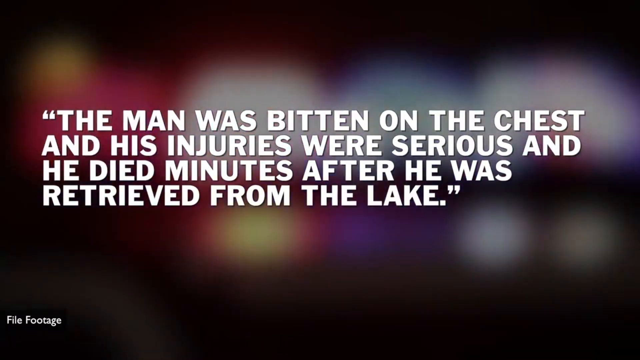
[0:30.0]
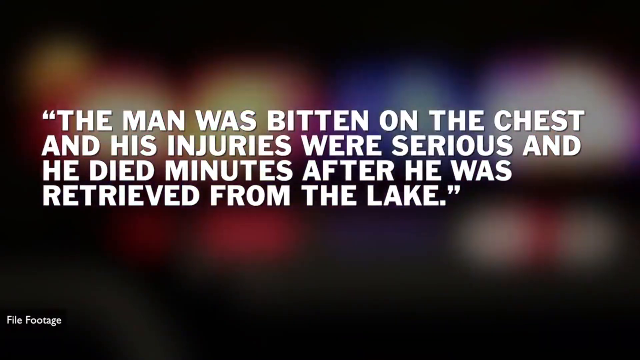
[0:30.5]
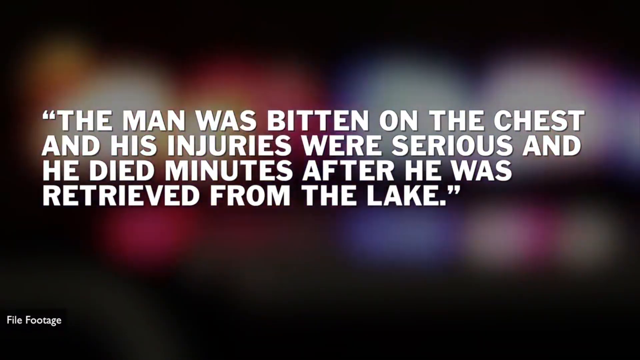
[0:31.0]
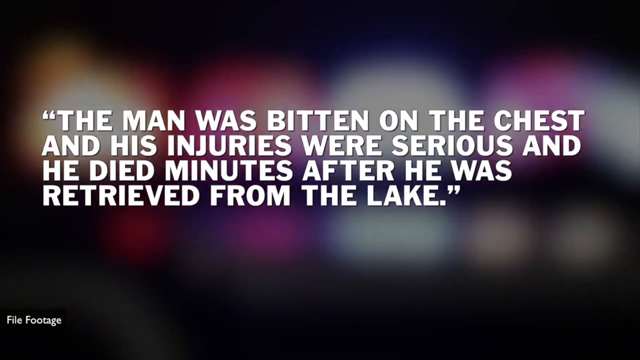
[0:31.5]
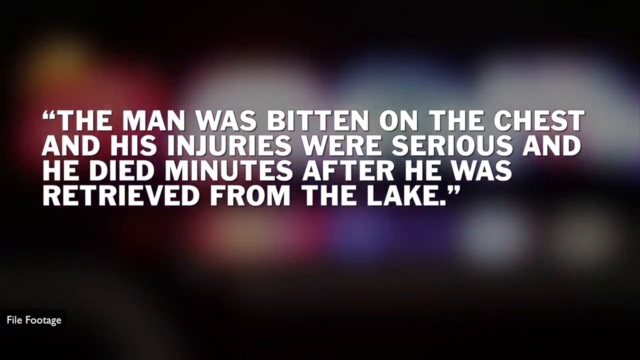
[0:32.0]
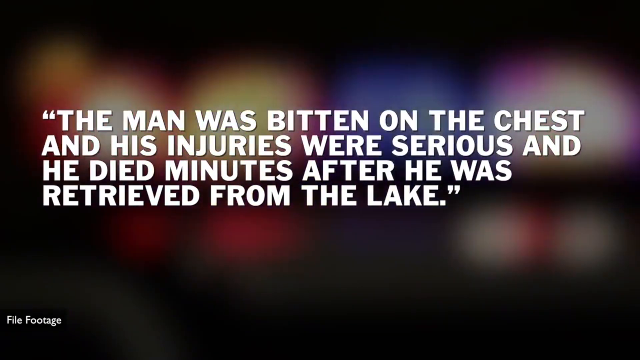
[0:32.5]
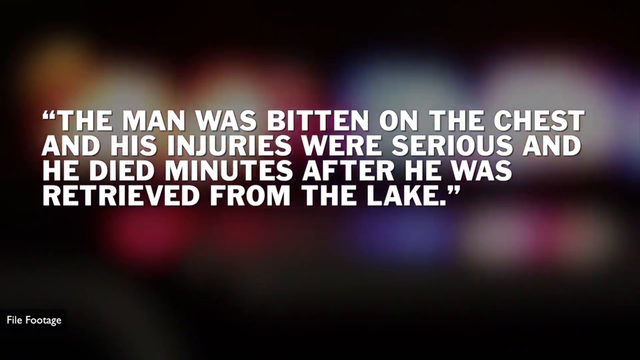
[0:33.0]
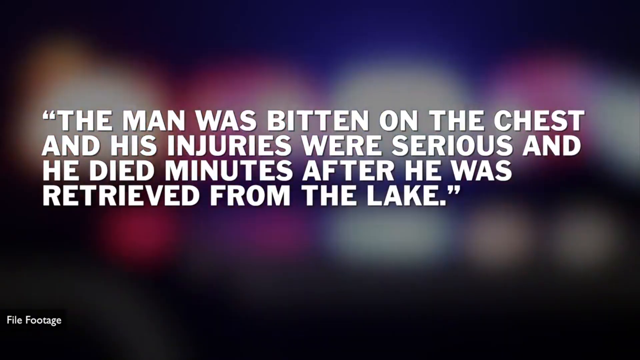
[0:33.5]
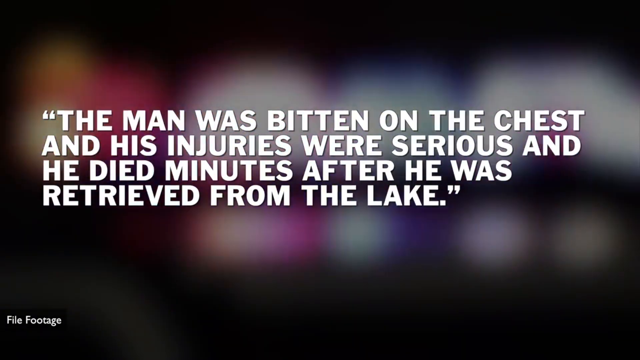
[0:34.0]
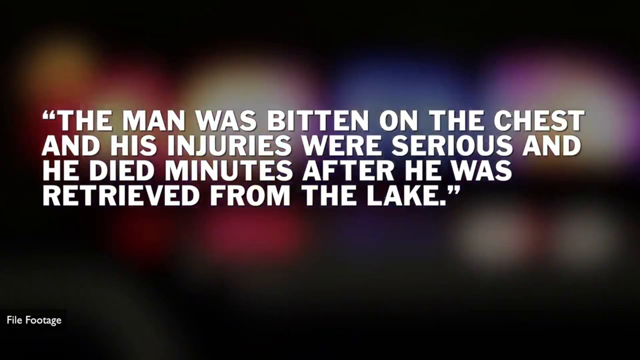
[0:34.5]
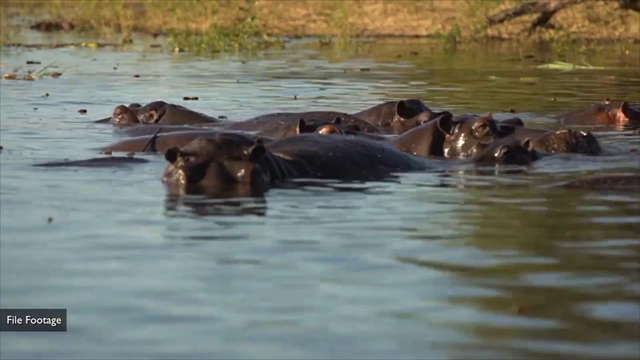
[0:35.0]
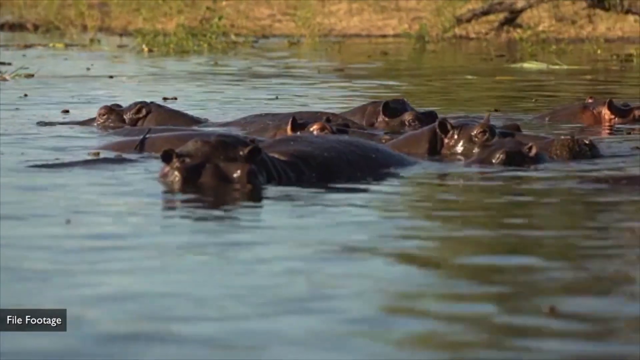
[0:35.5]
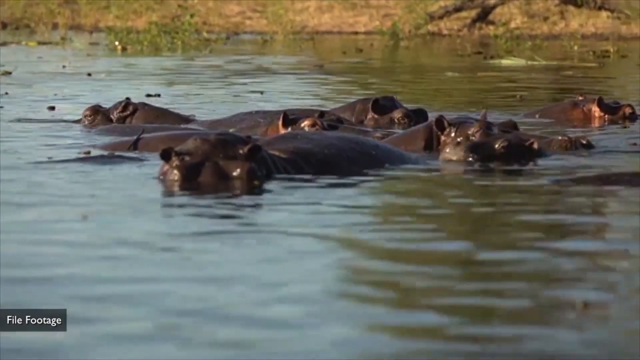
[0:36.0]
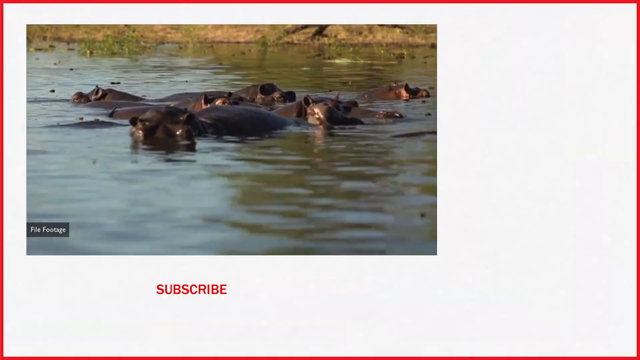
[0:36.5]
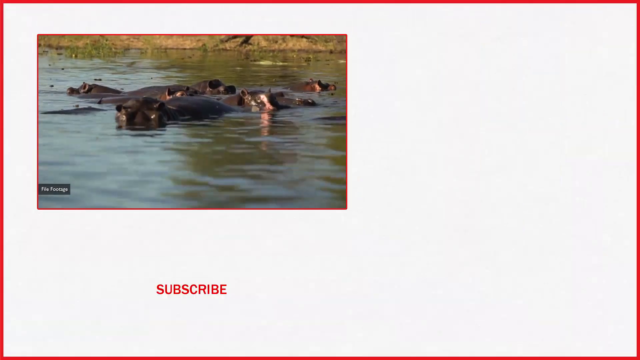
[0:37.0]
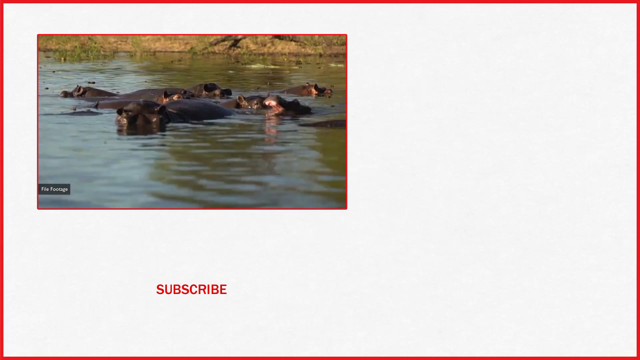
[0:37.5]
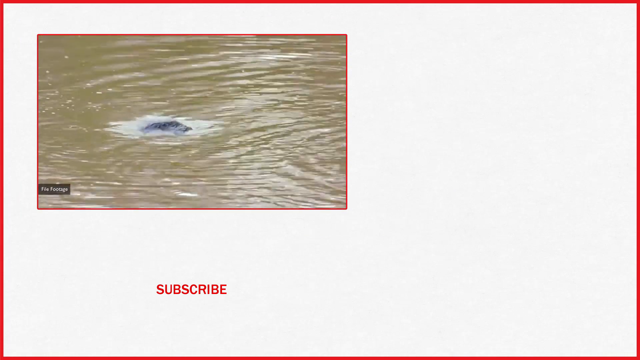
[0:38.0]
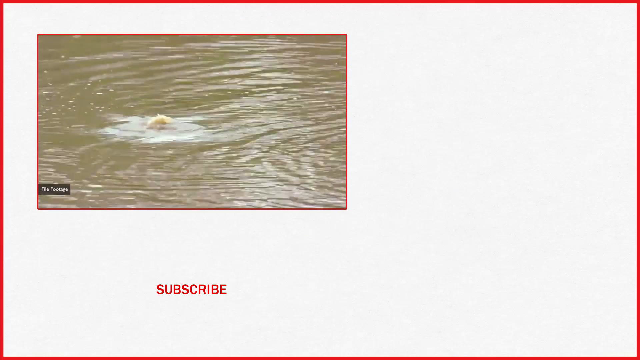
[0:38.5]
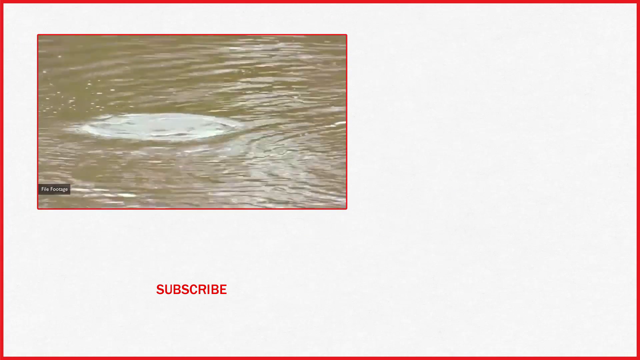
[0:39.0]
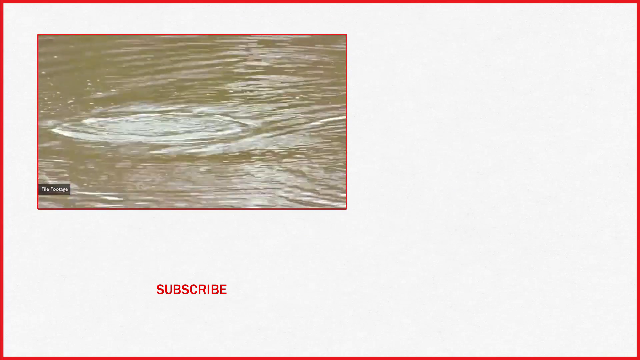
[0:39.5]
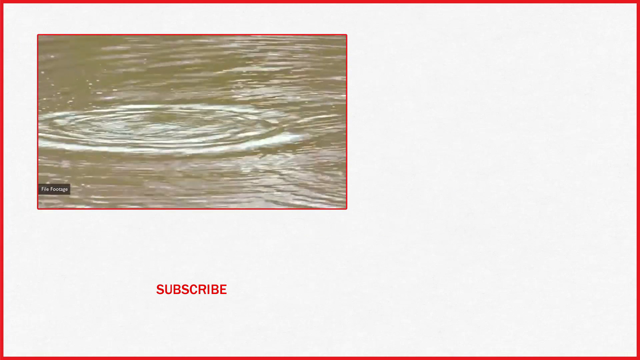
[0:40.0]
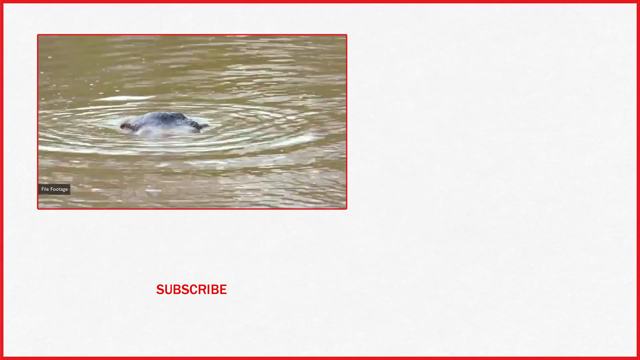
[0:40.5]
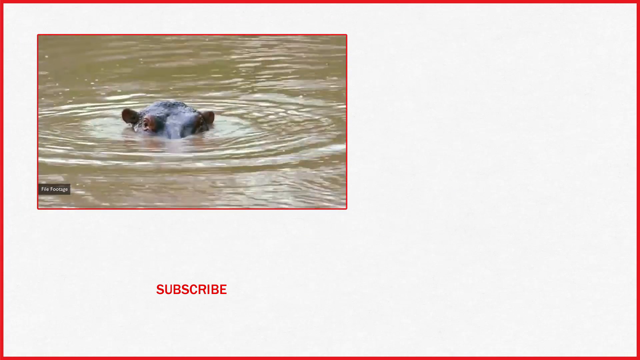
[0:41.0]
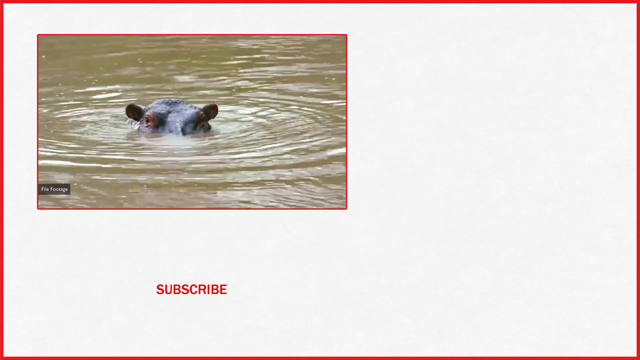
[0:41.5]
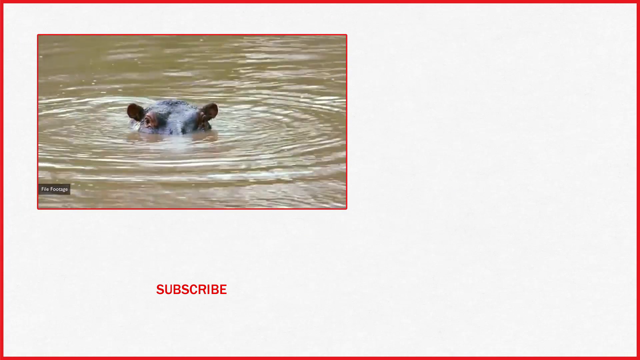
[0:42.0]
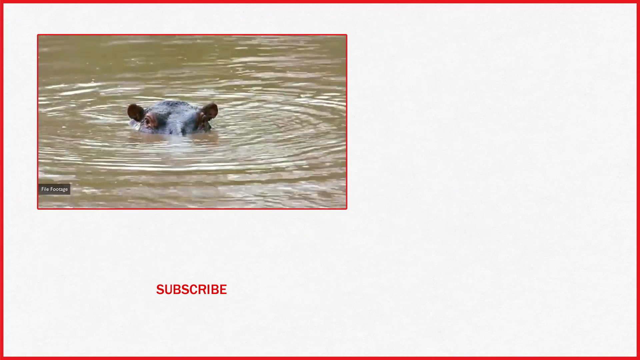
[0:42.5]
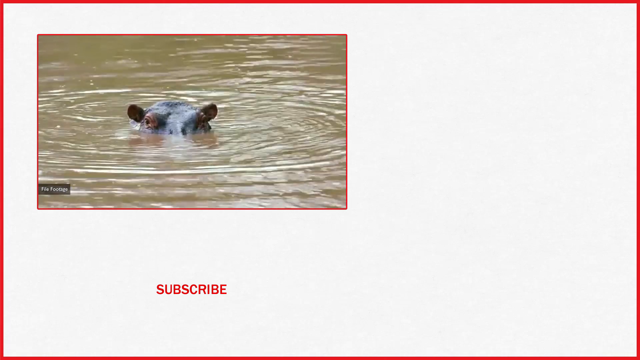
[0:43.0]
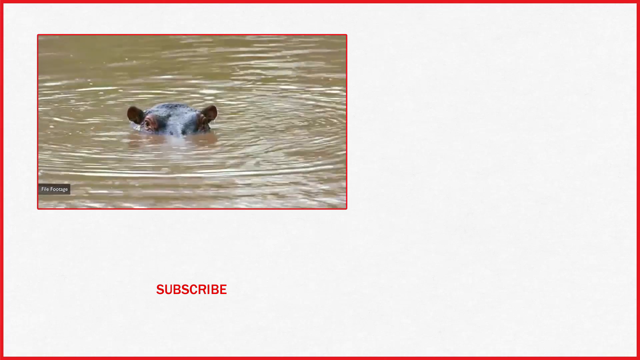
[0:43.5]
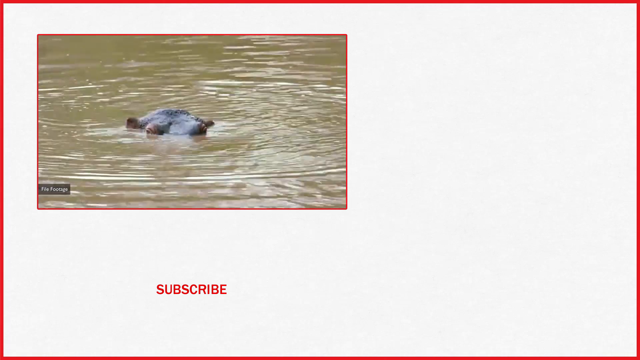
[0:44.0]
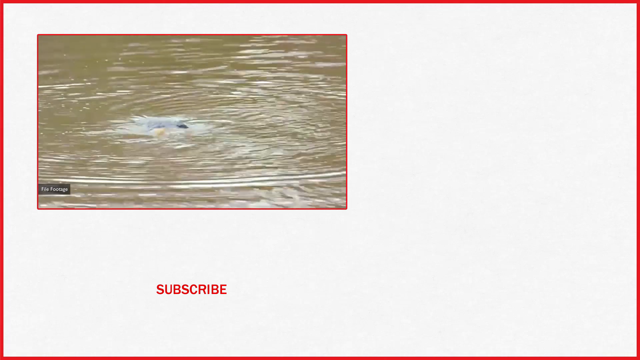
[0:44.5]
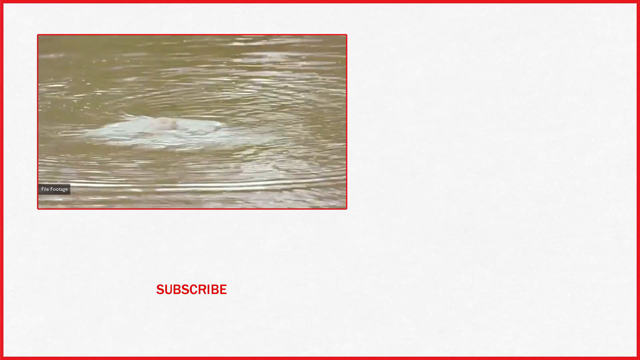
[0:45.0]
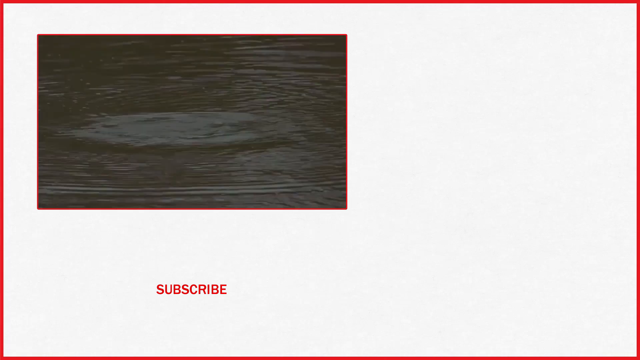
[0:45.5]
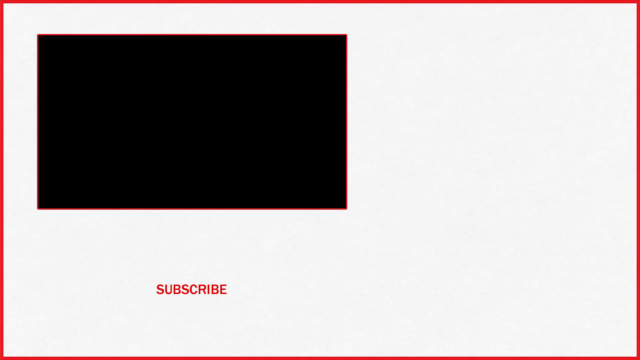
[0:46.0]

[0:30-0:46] The lights of the ambulance are visible, possibly taking away the person who was hurt. The hippos swim, submerging their whole bodies in the water, and seem to be playing; the area seems to be full of hippopotamuses. Another tweet reads "the man was bitten on the chest and his injury was serious and he died minutes after he was retrieved from the lake".